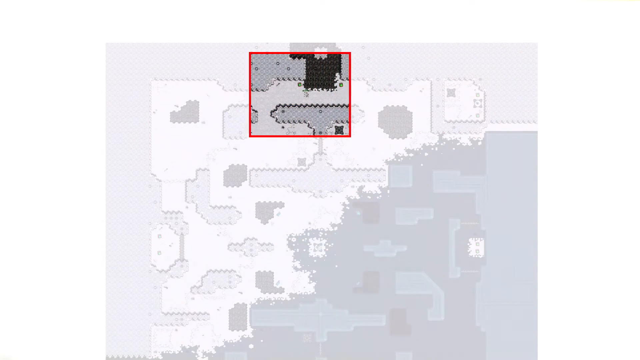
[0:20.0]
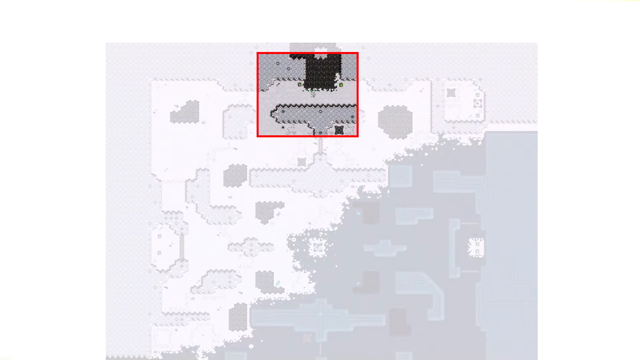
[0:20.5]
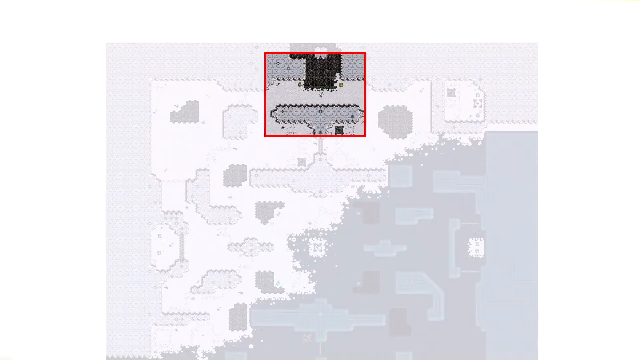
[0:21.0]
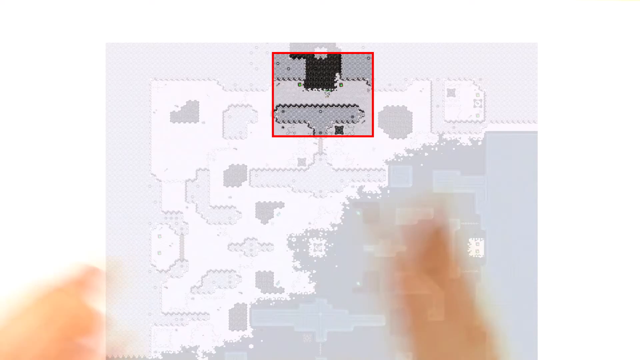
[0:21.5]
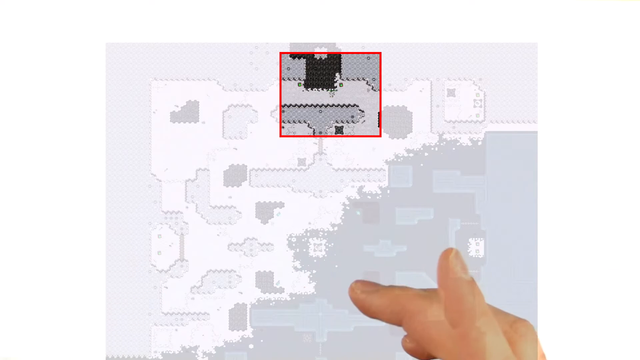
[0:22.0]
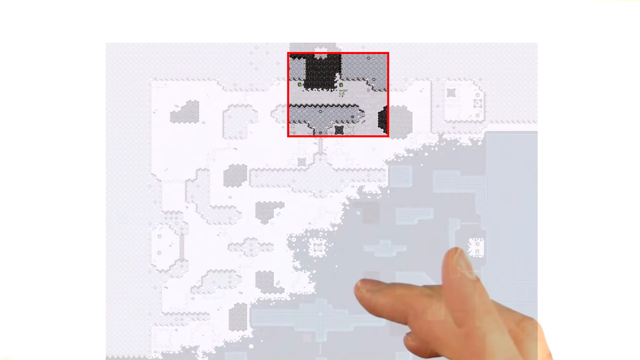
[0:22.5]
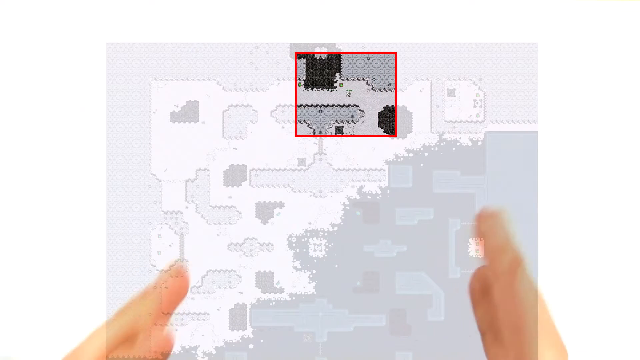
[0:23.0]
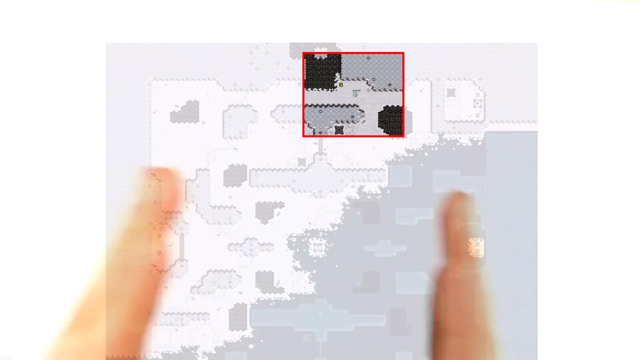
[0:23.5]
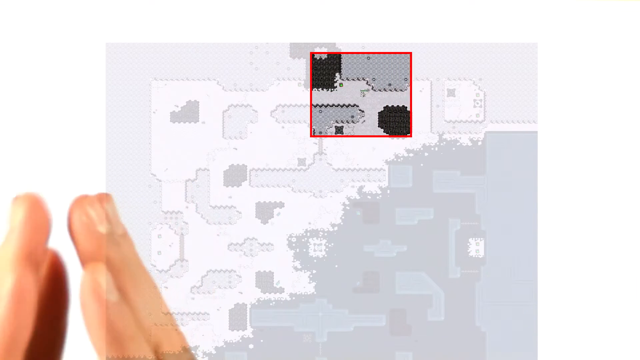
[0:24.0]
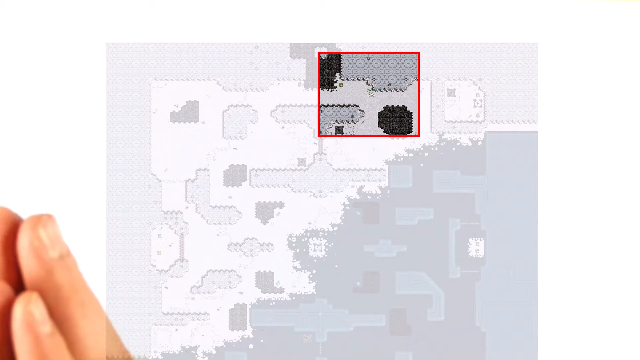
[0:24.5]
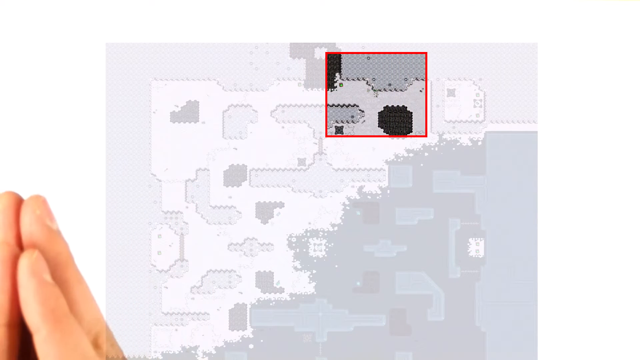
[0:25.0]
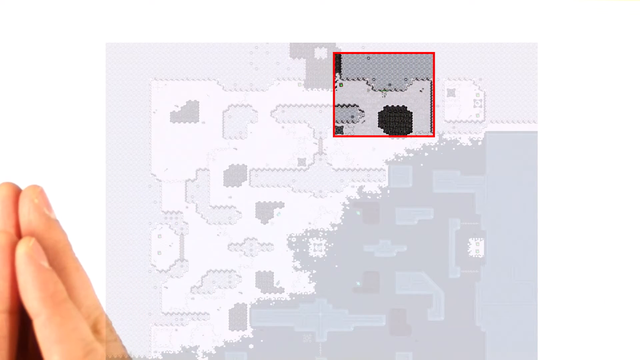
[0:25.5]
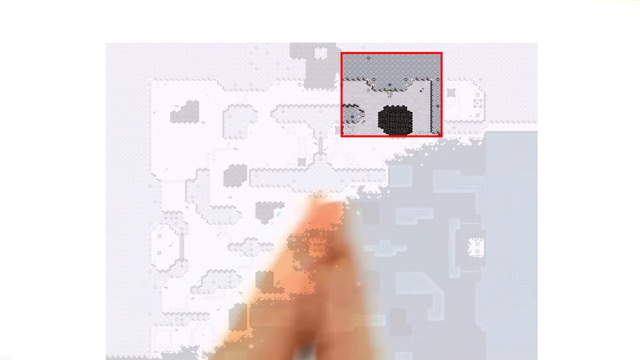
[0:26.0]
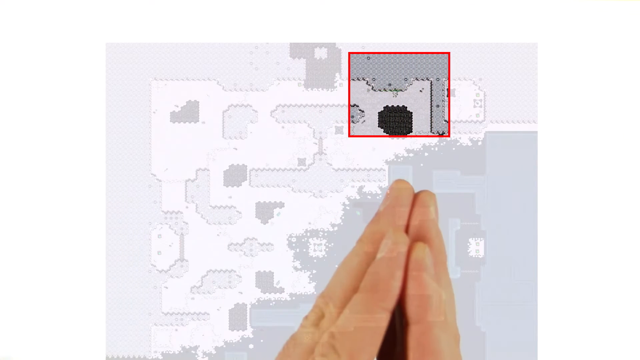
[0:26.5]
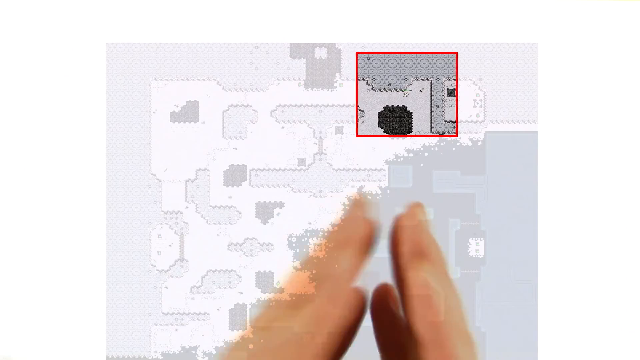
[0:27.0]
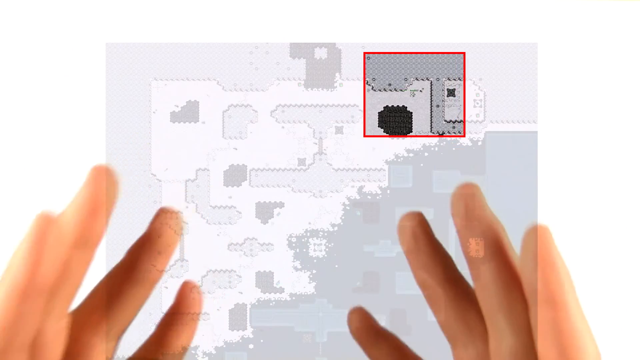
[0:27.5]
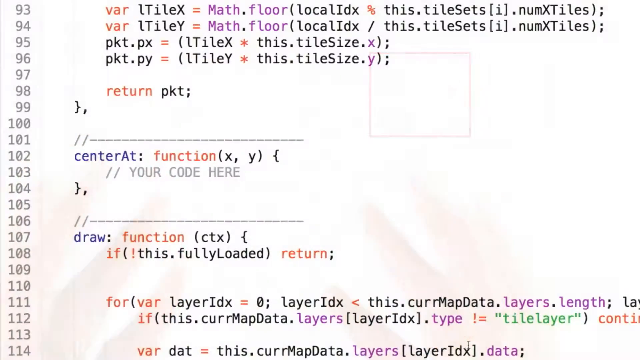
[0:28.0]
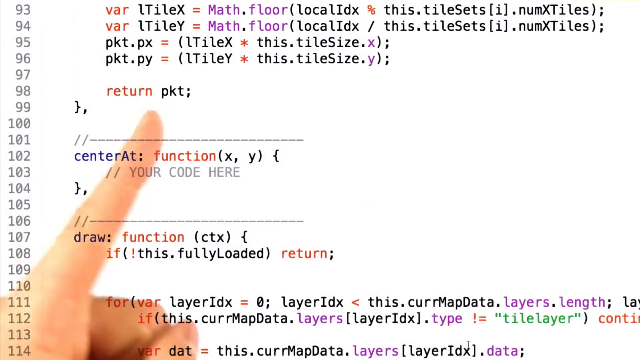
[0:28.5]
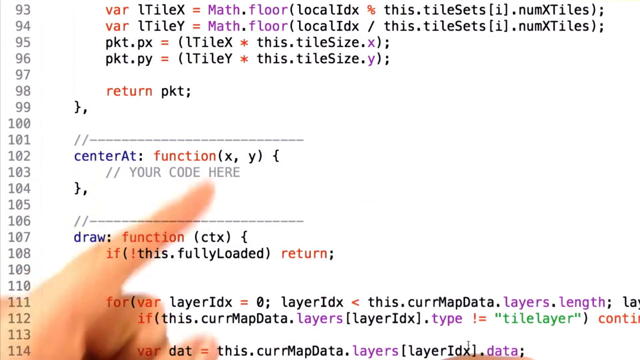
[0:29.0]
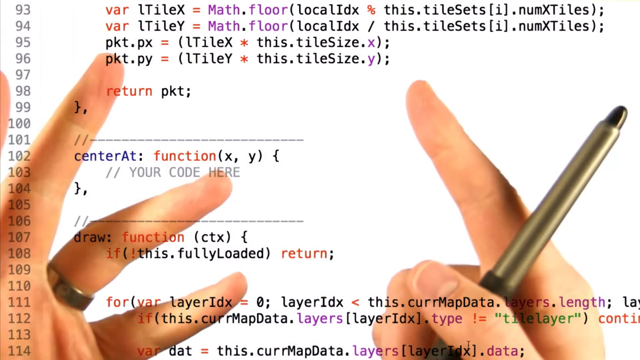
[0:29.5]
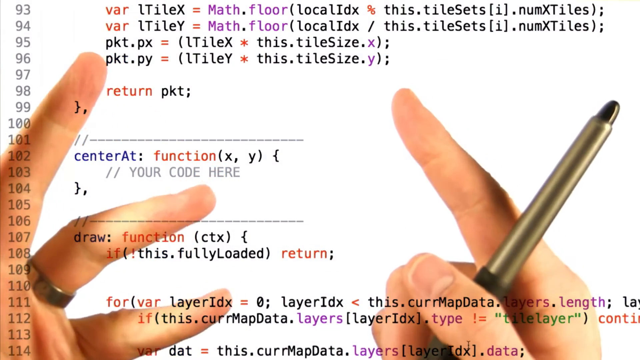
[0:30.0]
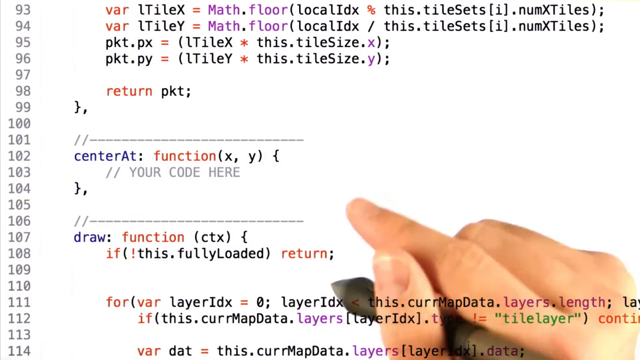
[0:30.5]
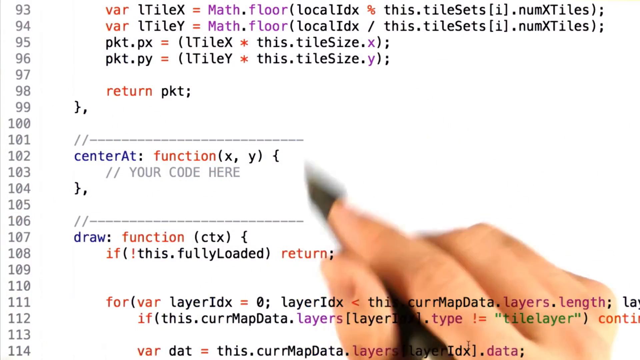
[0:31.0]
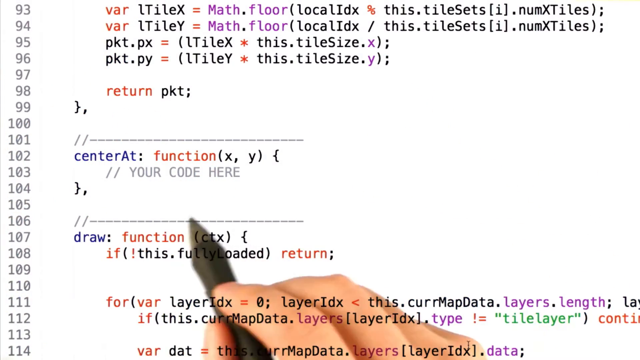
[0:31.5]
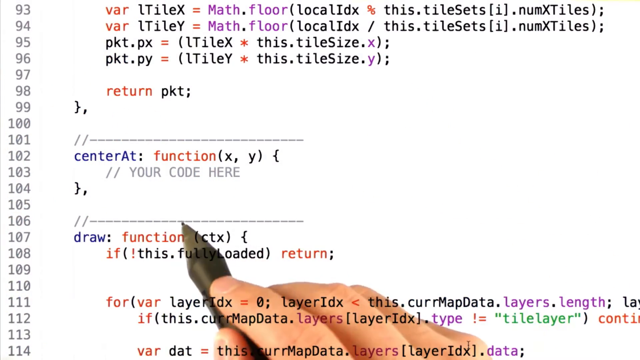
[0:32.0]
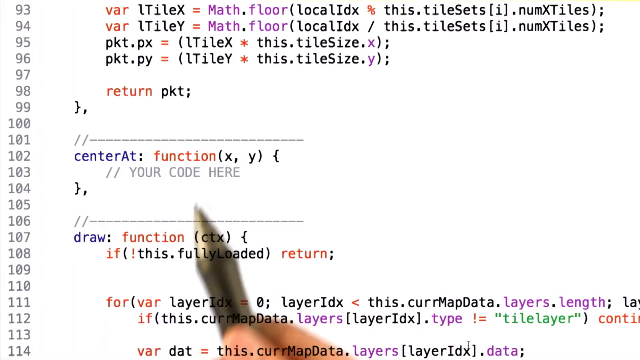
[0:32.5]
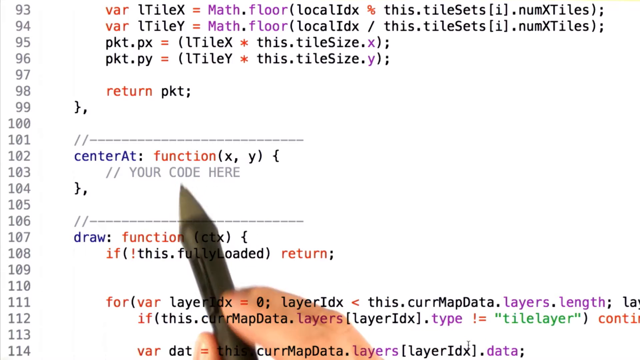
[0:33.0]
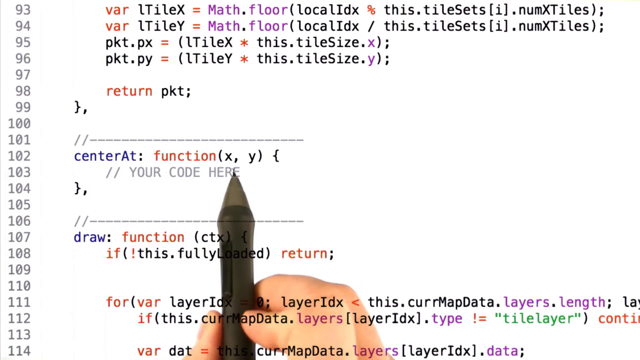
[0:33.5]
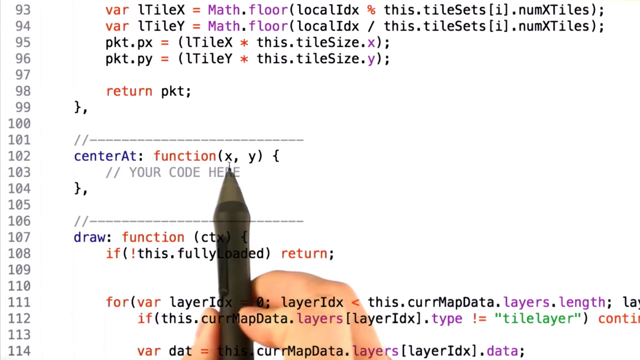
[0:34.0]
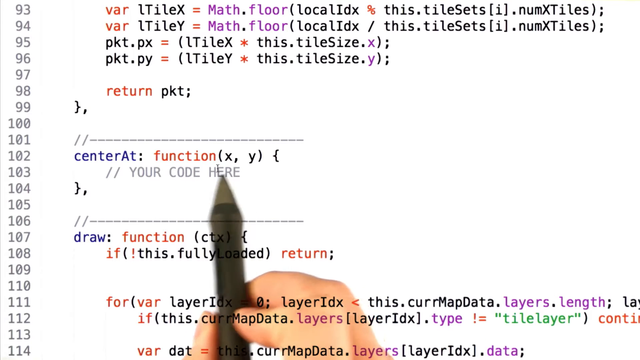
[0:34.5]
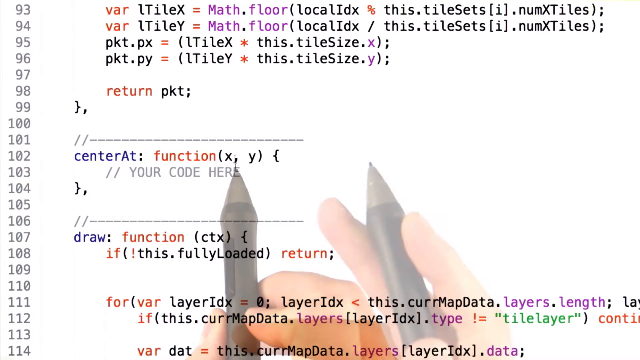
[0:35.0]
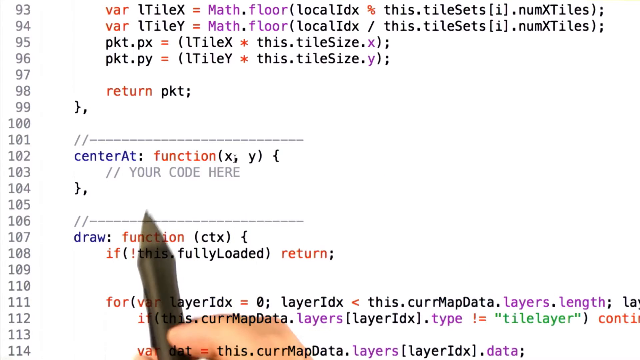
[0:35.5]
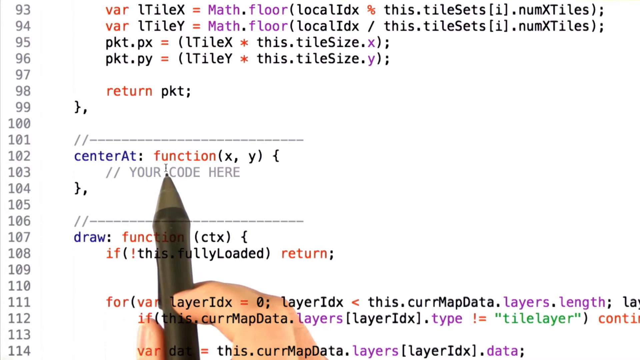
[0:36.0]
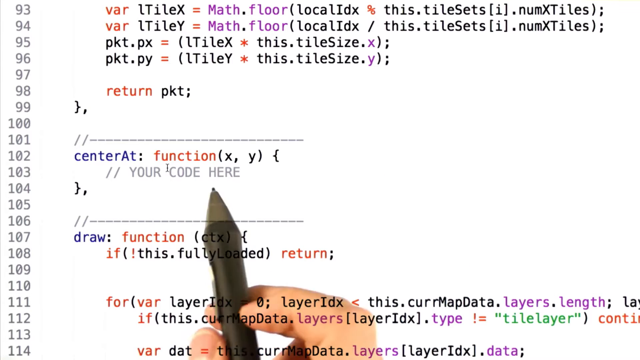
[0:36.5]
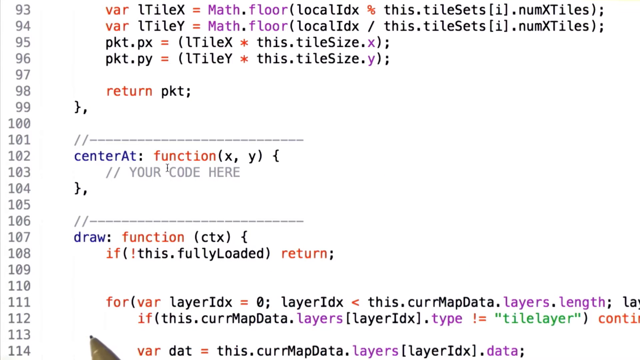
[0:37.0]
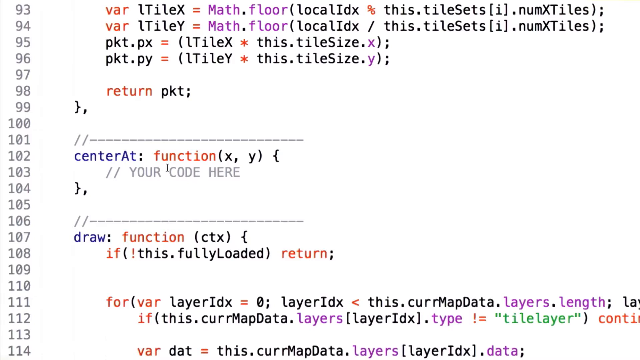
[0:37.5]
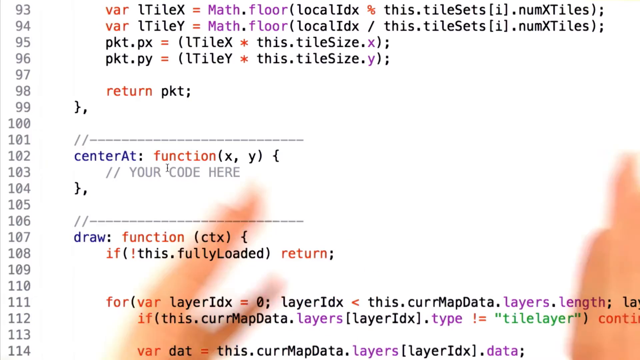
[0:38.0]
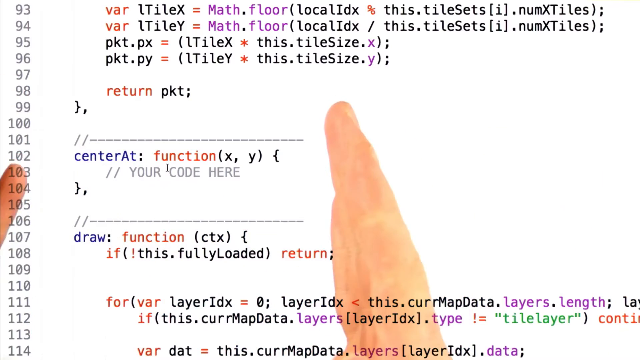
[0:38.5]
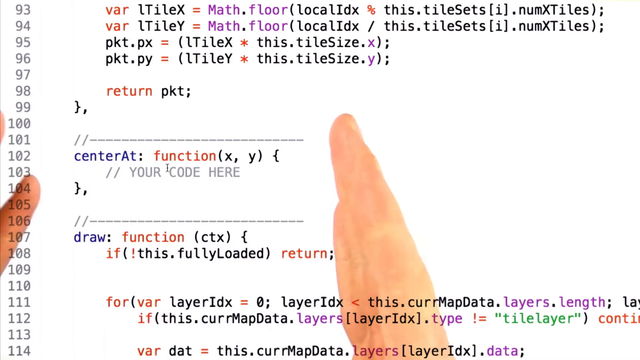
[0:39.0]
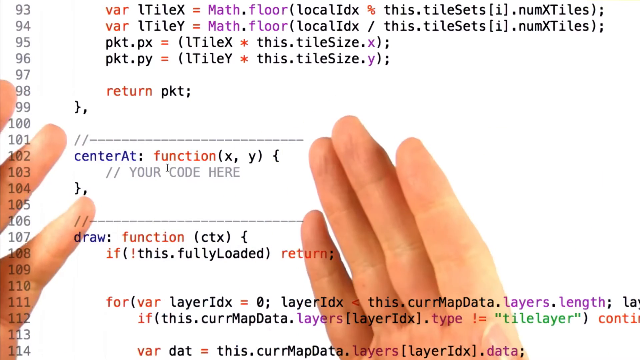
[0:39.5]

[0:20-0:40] The character moves from left to right with the red-highlighted box following it, going from the top upper left to the top center right. A hand shows exactly where the box is moving, pointing out certain objects. The man puts both hands together in a praying manner and moves them as the box moves. He then separates his hands, and the next screen shows code in an application, which he points out; it includes terms such as "var", "tile math" and "floor". He now holds a pen in his right hand and points it toward the center at function x and y, where it says "your code here", then points it at the X and Y on line 102.